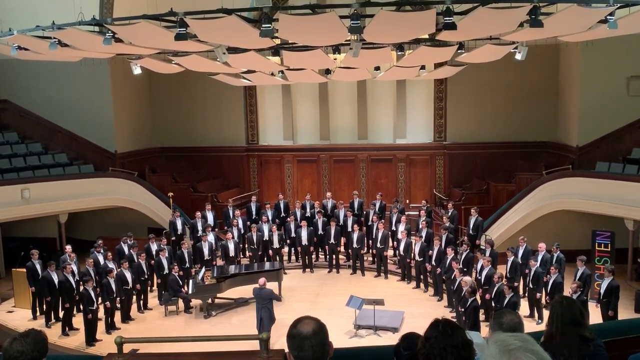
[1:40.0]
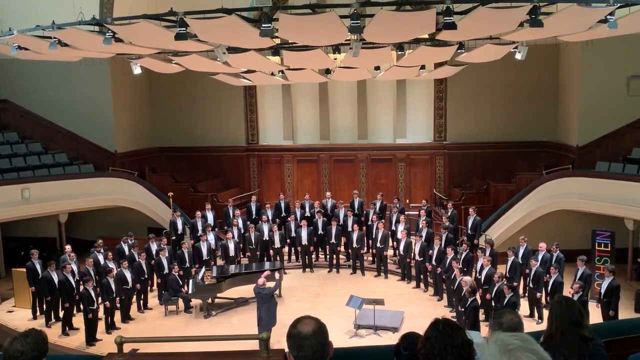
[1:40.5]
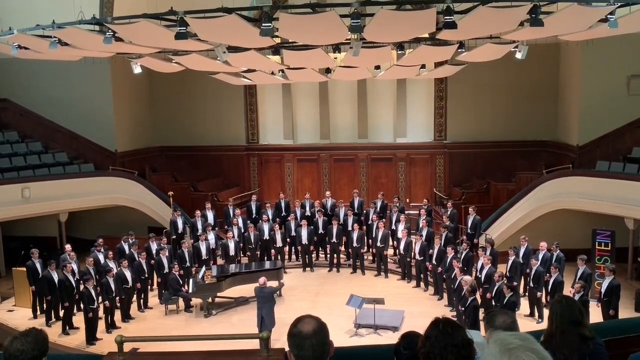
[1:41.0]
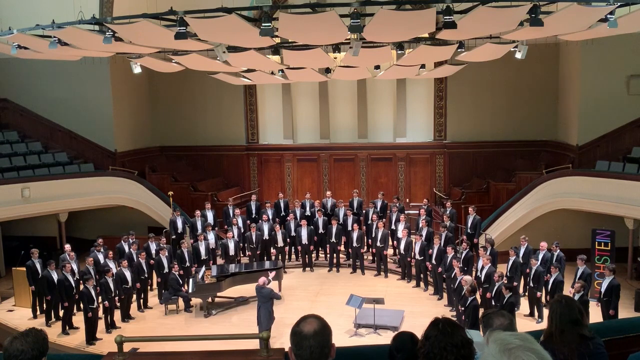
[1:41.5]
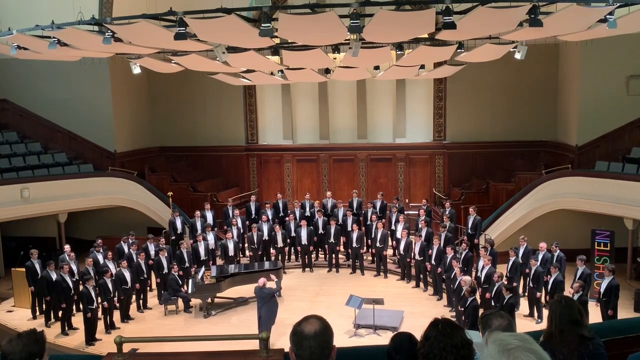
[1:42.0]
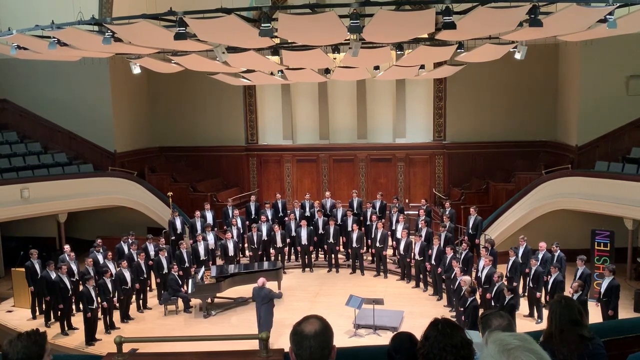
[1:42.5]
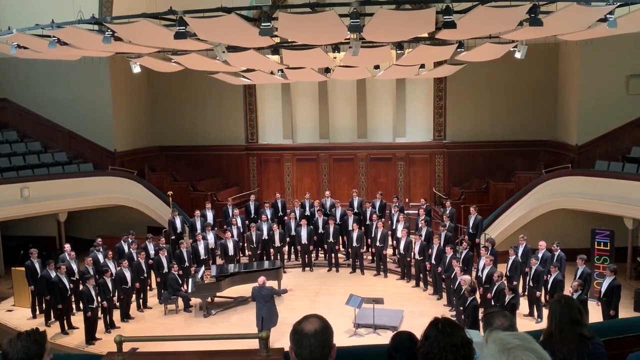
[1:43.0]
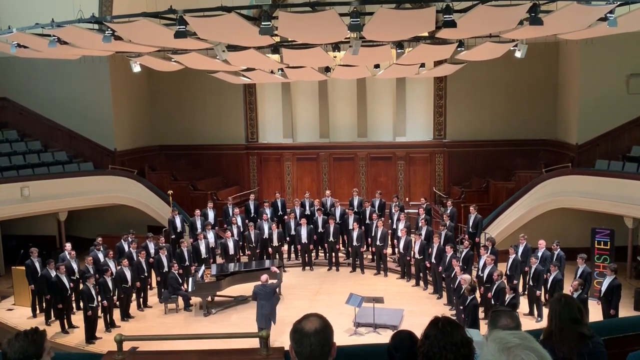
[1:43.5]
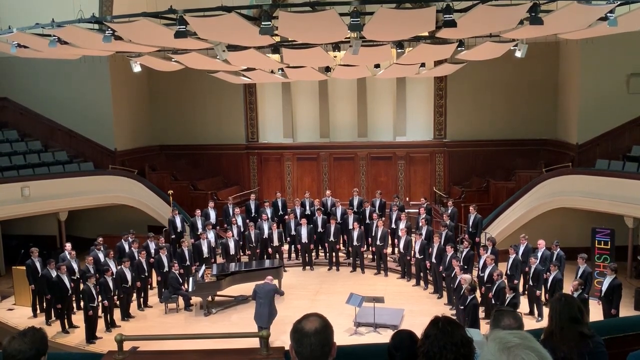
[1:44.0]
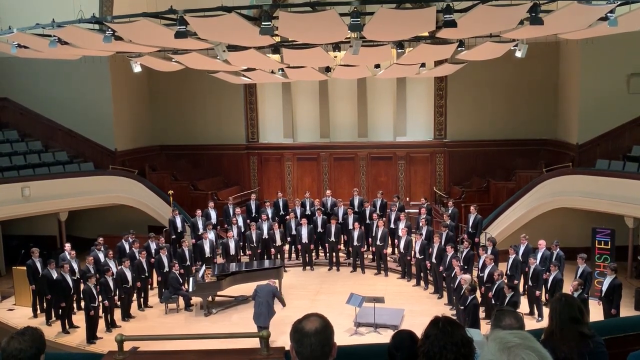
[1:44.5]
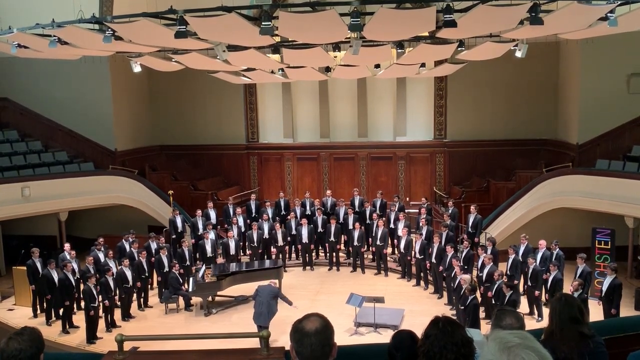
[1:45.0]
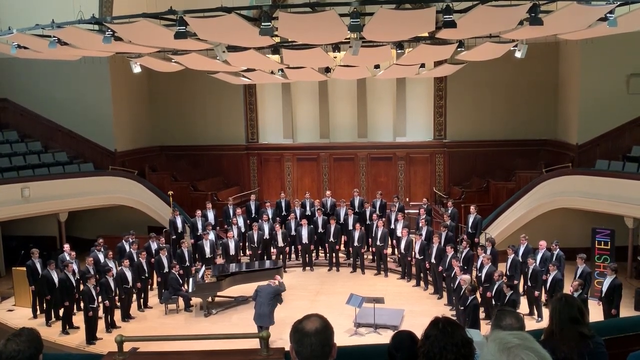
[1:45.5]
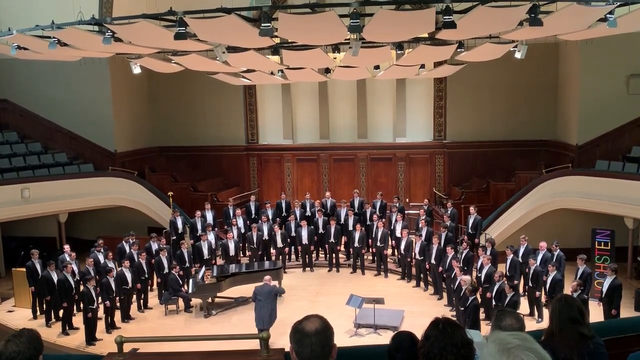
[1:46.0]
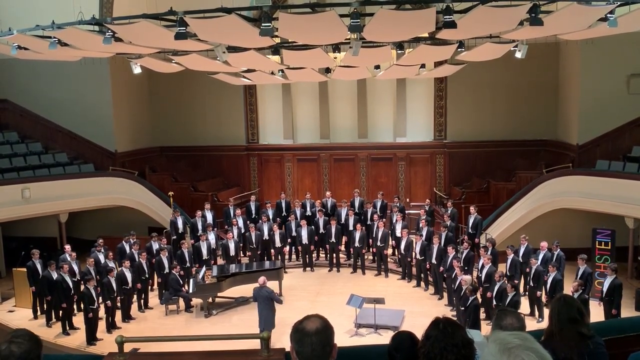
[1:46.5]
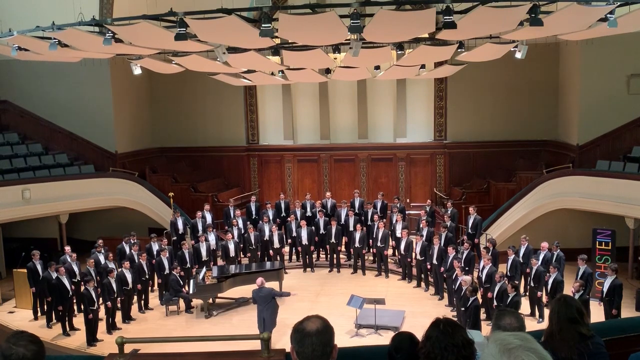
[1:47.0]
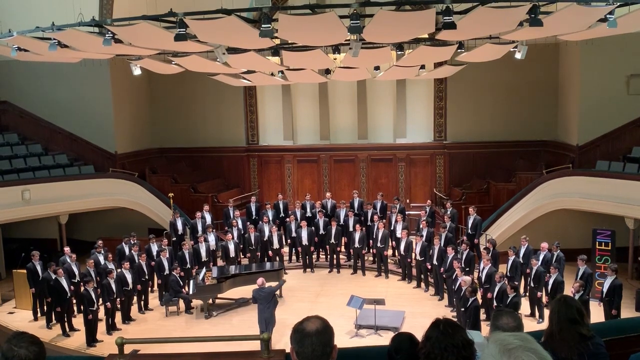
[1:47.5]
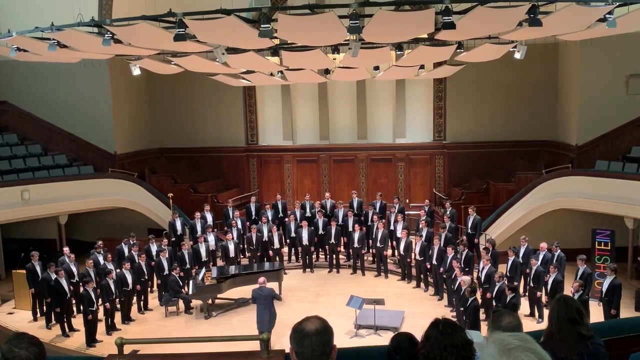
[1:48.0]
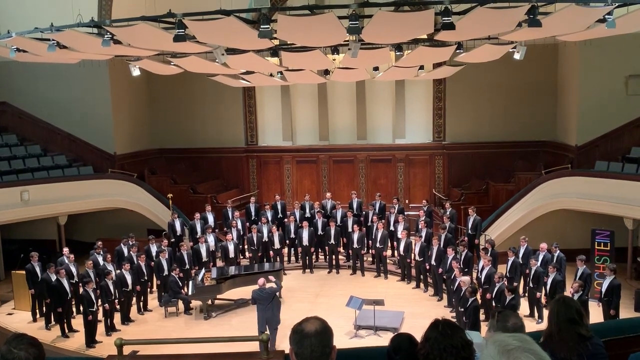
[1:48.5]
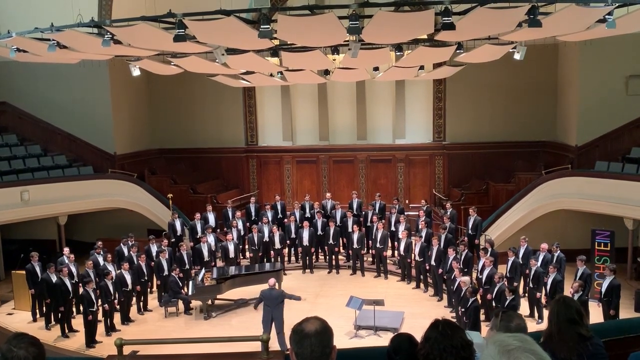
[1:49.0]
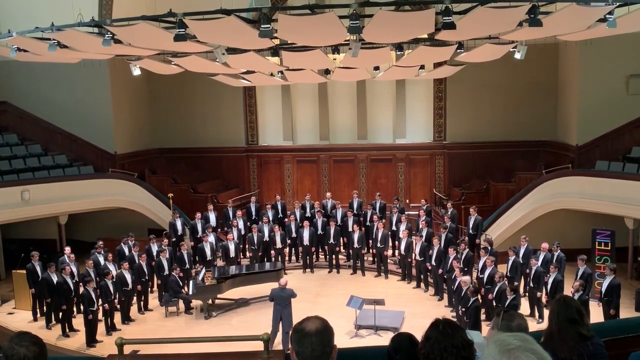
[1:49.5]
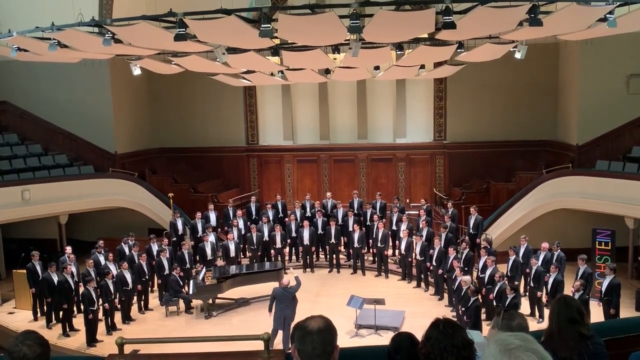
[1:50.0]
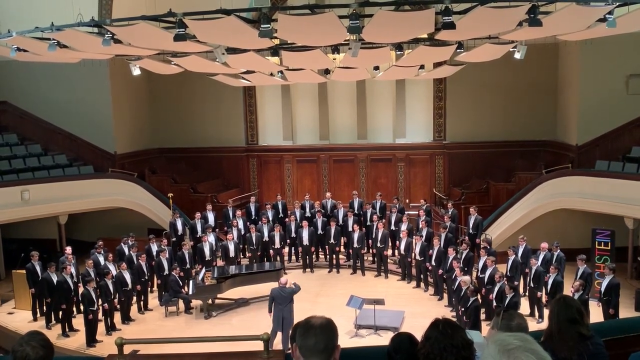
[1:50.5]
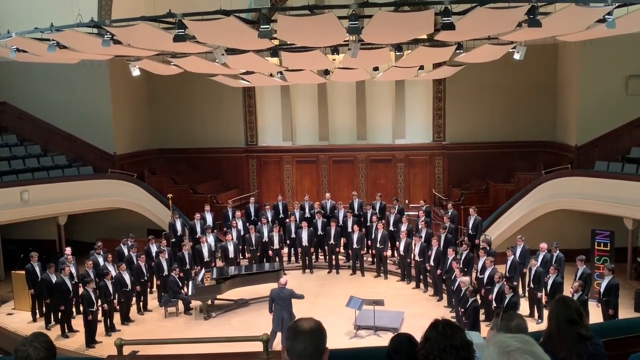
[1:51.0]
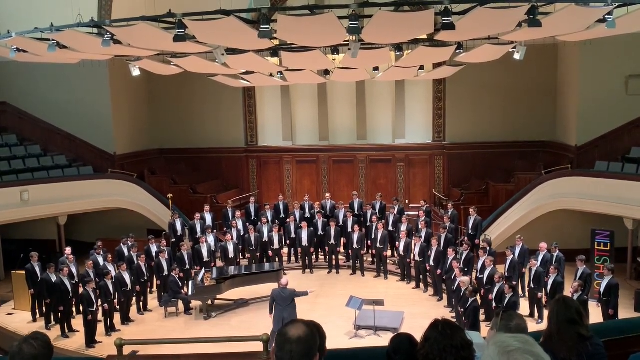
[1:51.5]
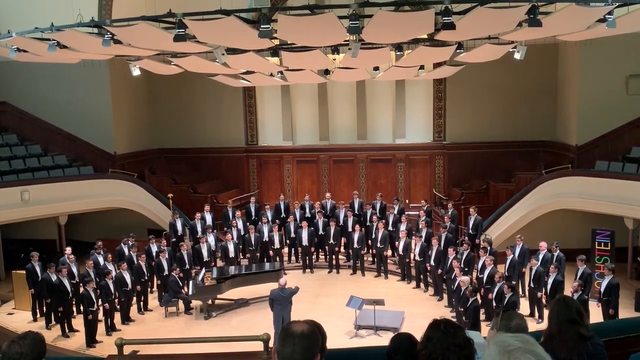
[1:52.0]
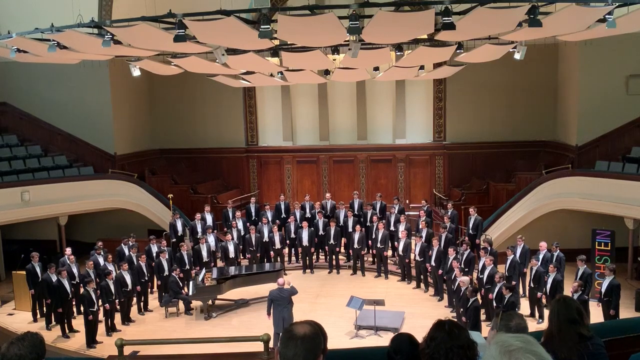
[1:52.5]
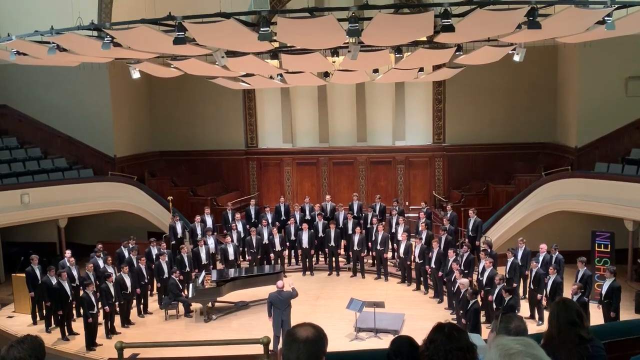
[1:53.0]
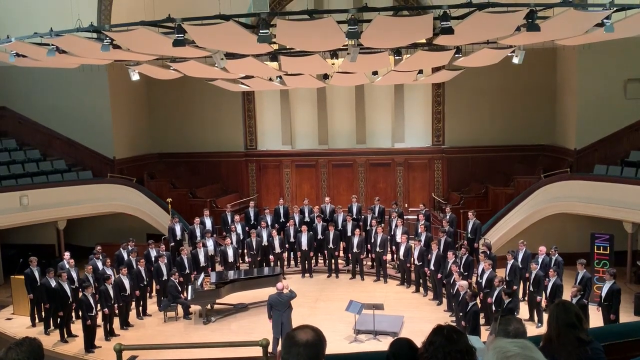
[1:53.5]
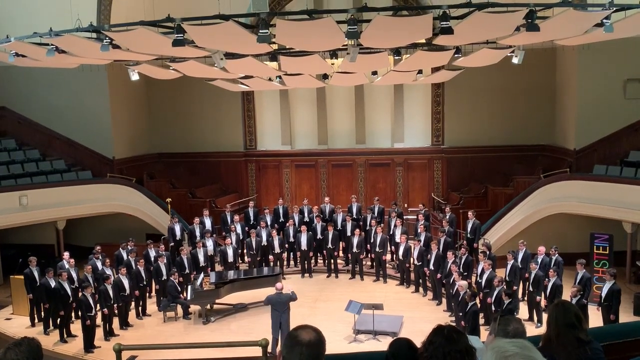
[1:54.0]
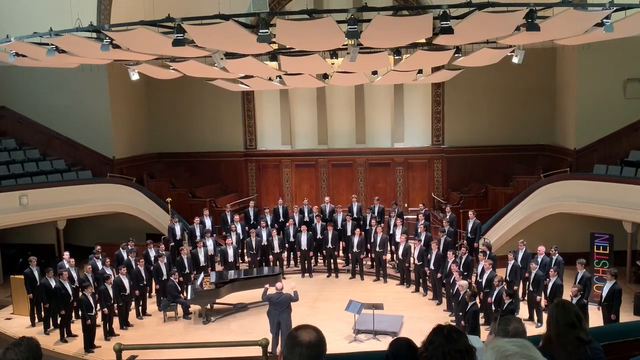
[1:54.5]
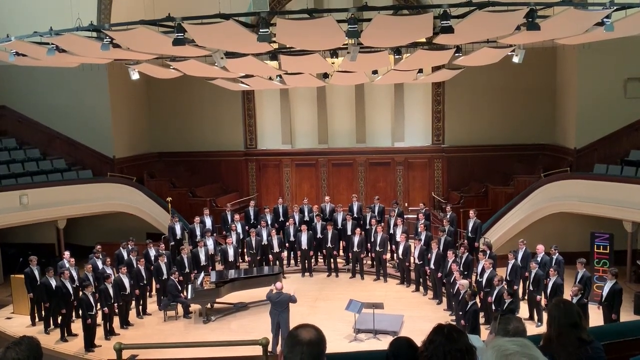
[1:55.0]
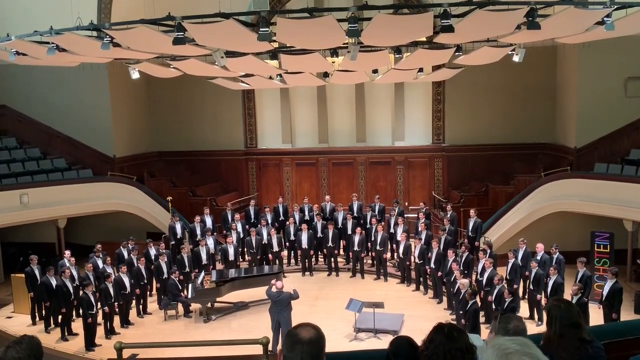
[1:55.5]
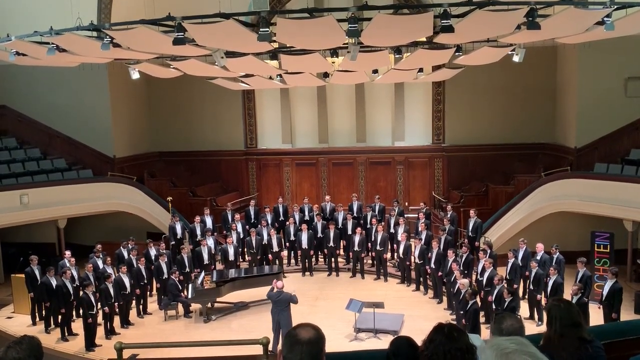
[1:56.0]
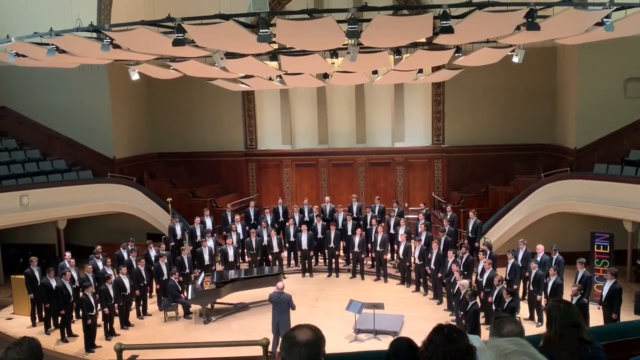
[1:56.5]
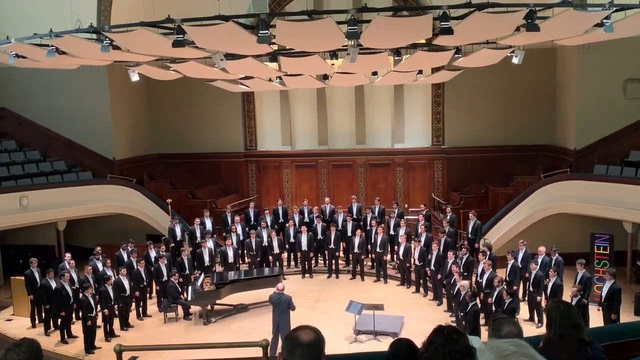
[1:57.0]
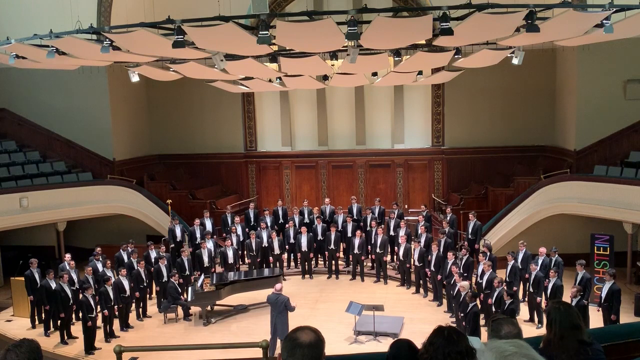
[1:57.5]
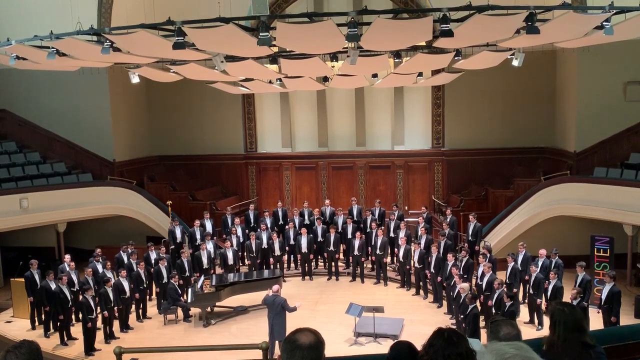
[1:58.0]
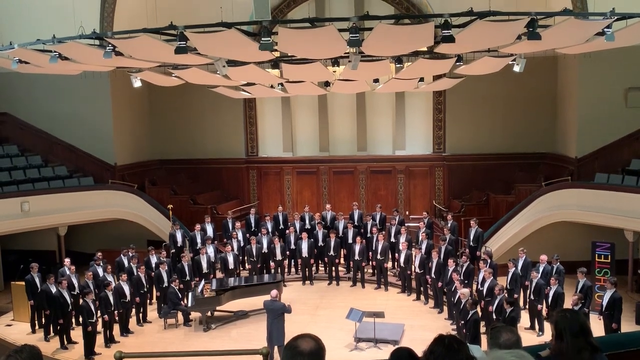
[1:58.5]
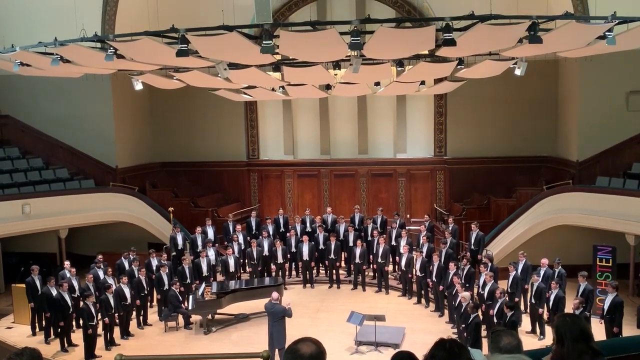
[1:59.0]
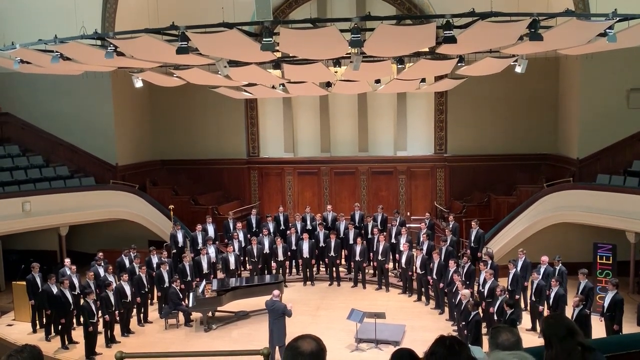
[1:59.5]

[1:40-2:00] The conductor conducts his choir of men, who stand in the same three semicircle rows, the first row on the floor of the stage and the next rows on higher tiers so that all are visible. Facing the center, he conducts the men with both arms. The piano player sitting at the baby grand piano has his hands on his lap, not on the keys, so he is not playing. At one point the conductor bows his head and bends over in a dramatic conducting move. He then lifts his head and tilts his body backwards a little, his right arm conducting the people in front of him, going up and down and then left and right. His left arm remains stationary at his side before rising to conduct as well. The men are all attentive, watching him for cues about when and how to sing.